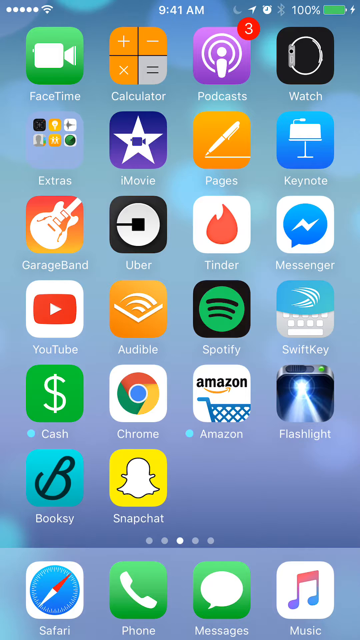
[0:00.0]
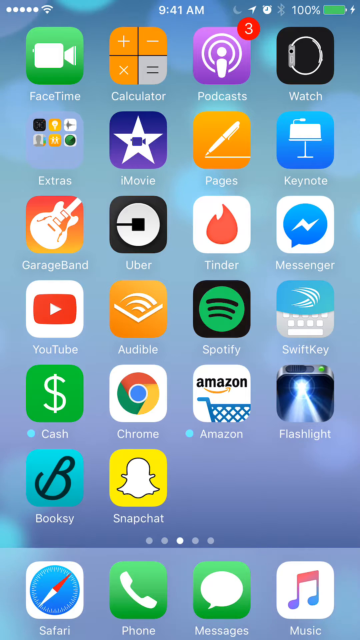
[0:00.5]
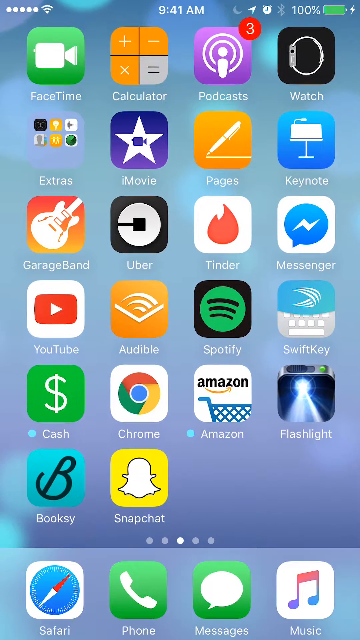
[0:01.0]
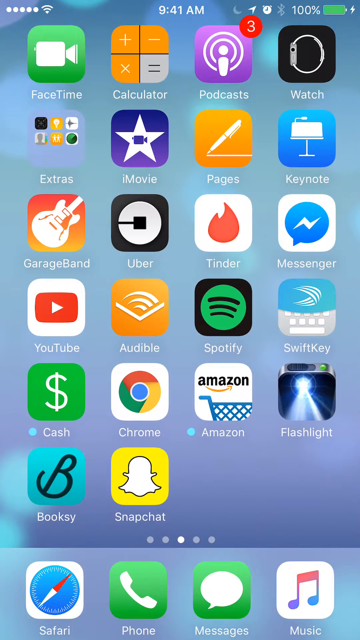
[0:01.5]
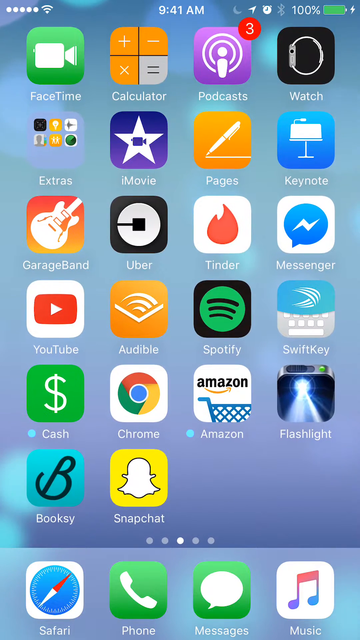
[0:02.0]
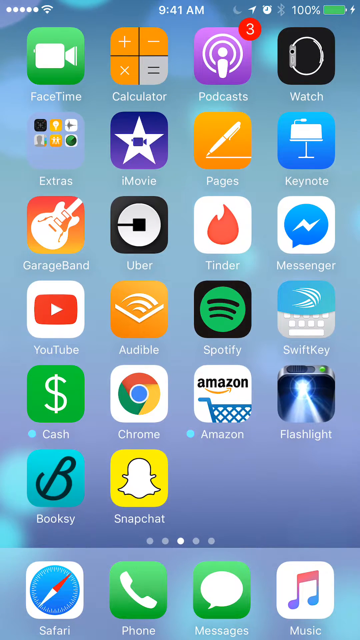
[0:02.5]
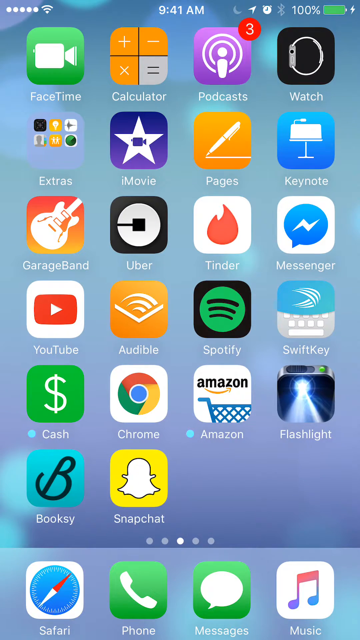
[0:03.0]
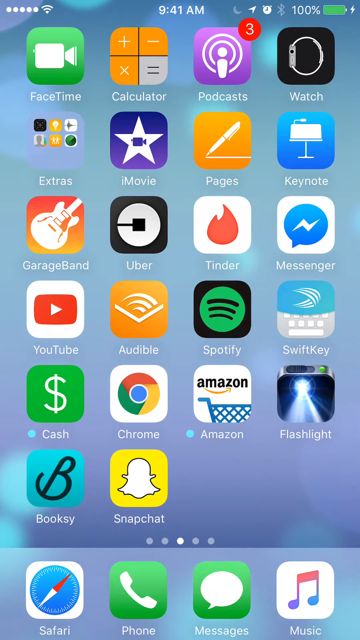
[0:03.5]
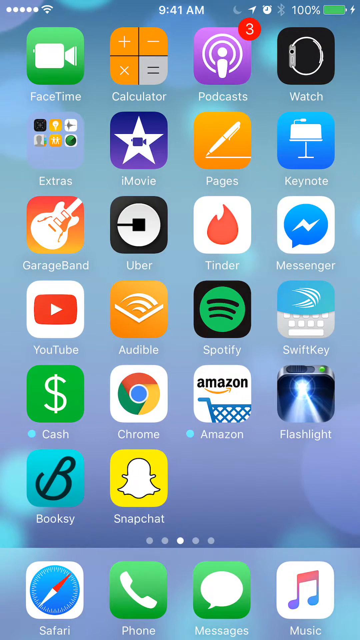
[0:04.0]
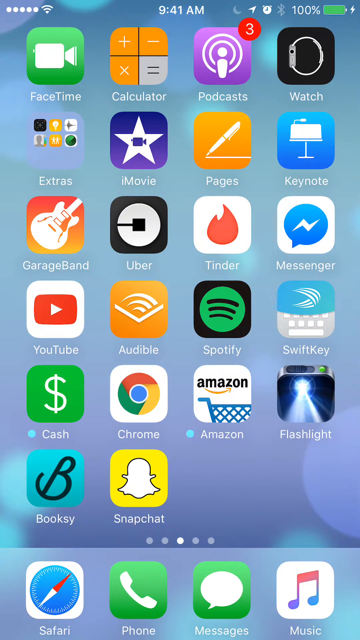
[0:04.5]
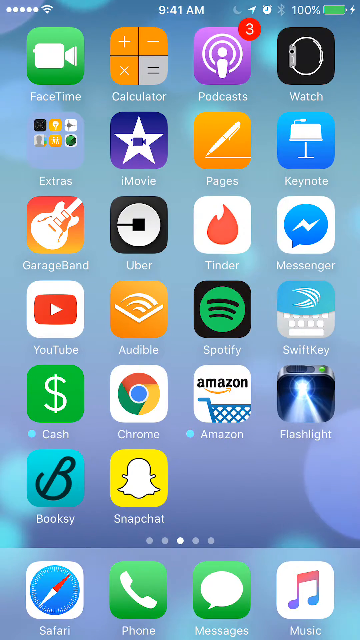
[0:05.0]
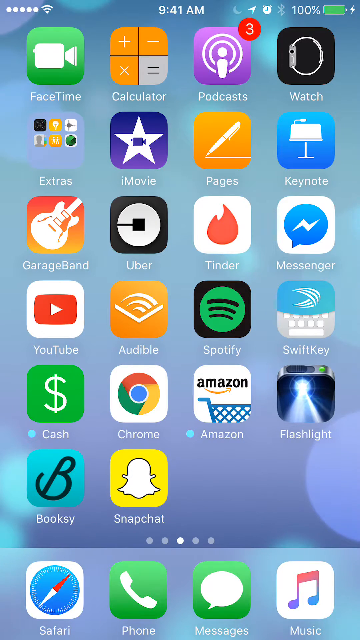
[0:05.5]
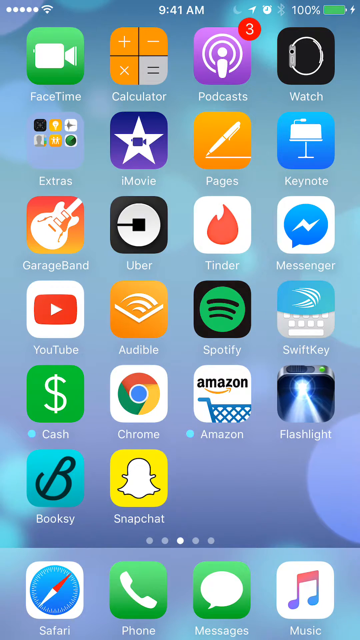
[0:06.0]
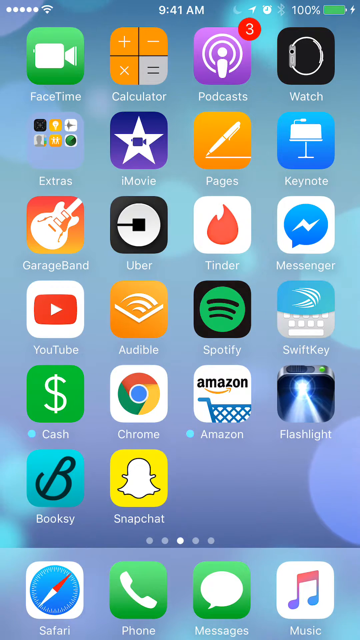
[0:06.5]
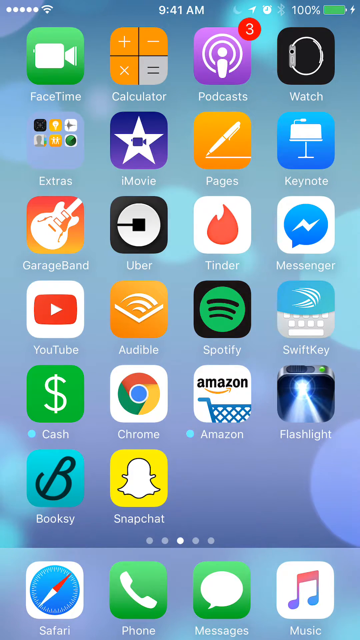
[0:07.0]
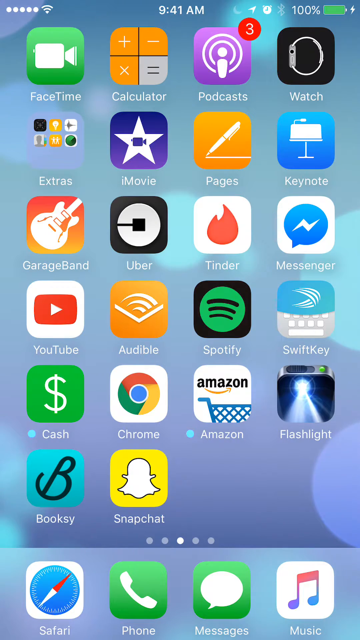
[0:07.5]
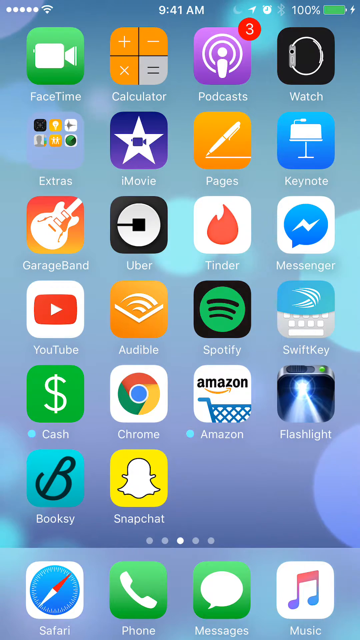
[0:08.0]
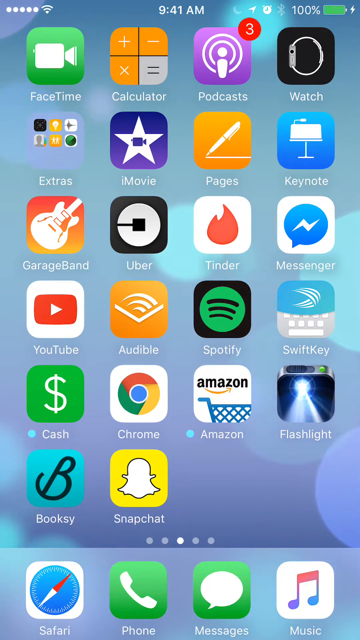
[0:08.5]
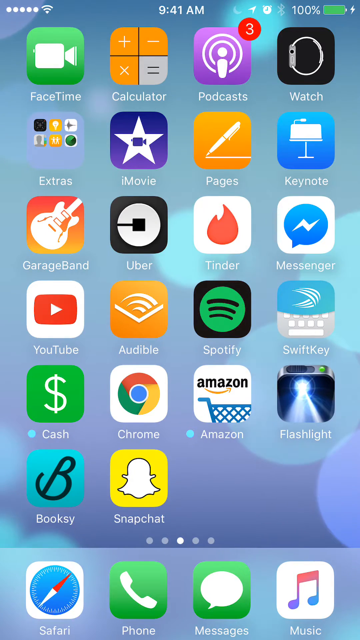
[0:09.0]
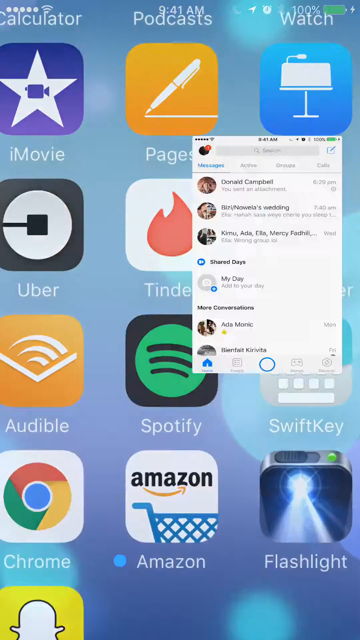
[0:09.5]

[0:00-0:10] The video appears to be a screen capture of an Apple device or iPhone. At the bottom of the home screen are the Safari, phone, messages and iTunes symbols, and five dots appear somewhere in the middle. The home screen has four columns and six rows of applications, but the bottom two are not there. At the top it reads "9.41 AM". The view just hovers over the screen, where applications including FaceTime, Calculator, Podcast, Watch, Extras, iMovies, Pages, Keynotes, GarageBand, Uber, Tinder, Messenger, YouTube, Audible, Spotify, SwiftKey, Cash, Chrome, Amazon, Flashlight, BookSee and Snapchat are visible. Suddenly the Messenger application appears to be tapped, and the Messenger app pops up. The header reads "Messages", "Active", "Groups" and "Calls", with Messages highlighted. Names such as Donald Campbell, Busy, Noella's Wedding, Kimu, Ada, Elia and Mercy are listed, with "Shared Days" and "More Conversations" at the bottom. Then Messages is clicked or tapped.